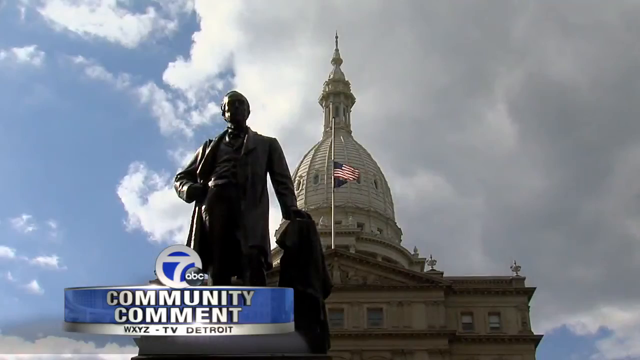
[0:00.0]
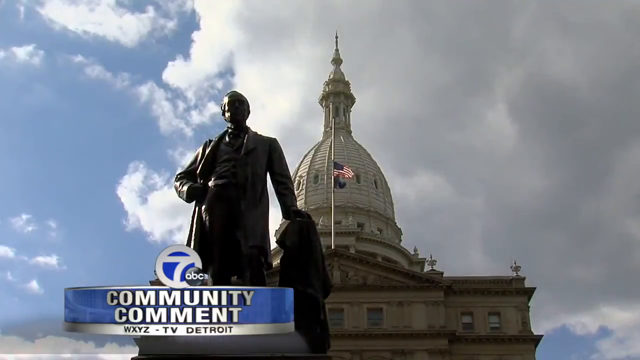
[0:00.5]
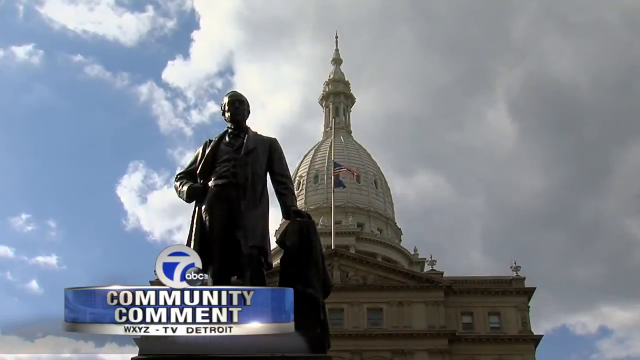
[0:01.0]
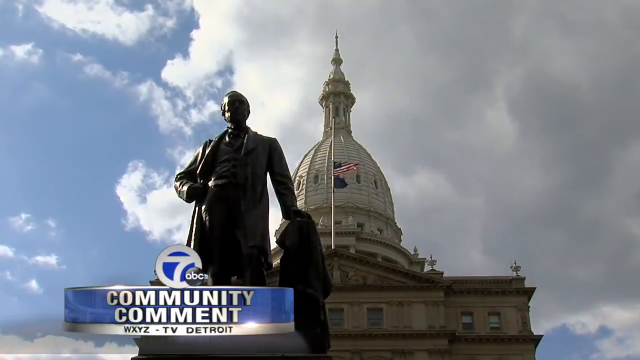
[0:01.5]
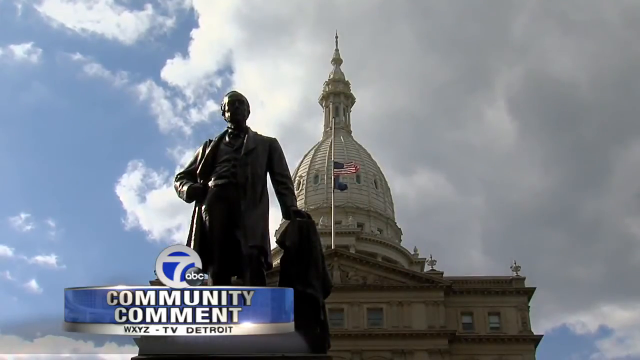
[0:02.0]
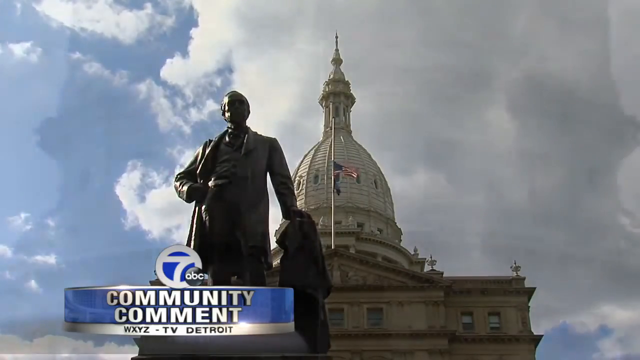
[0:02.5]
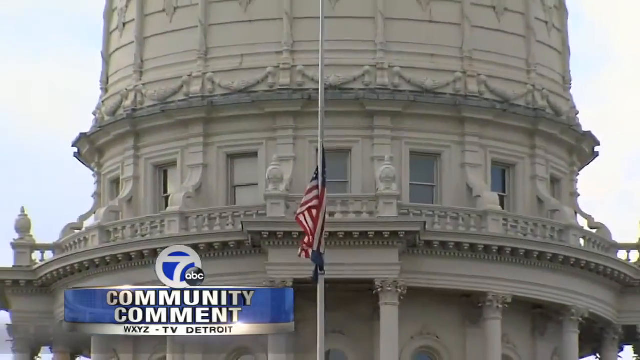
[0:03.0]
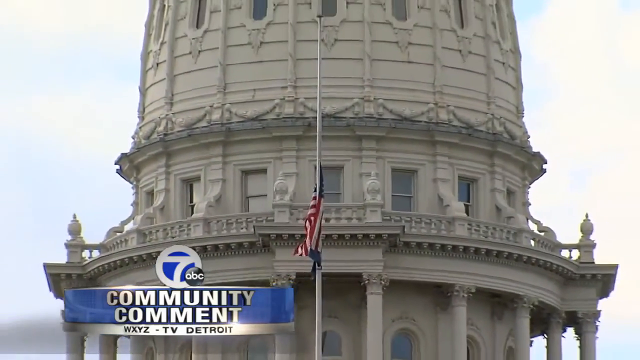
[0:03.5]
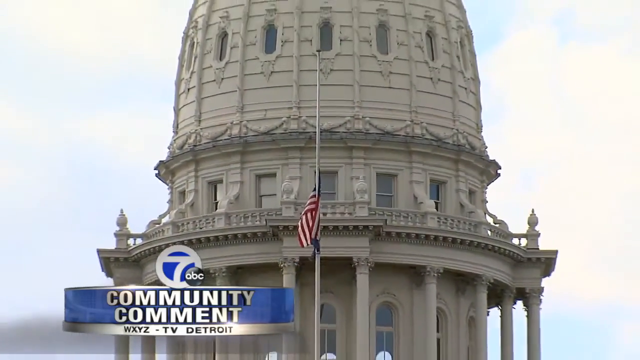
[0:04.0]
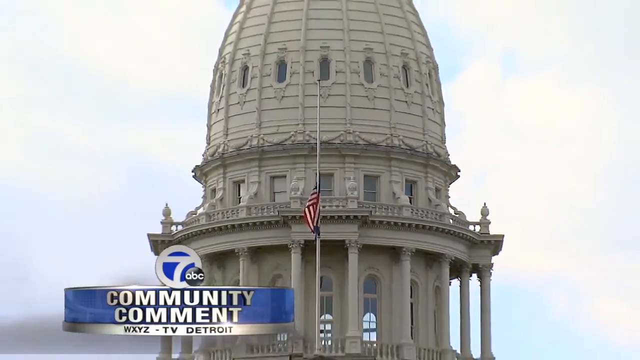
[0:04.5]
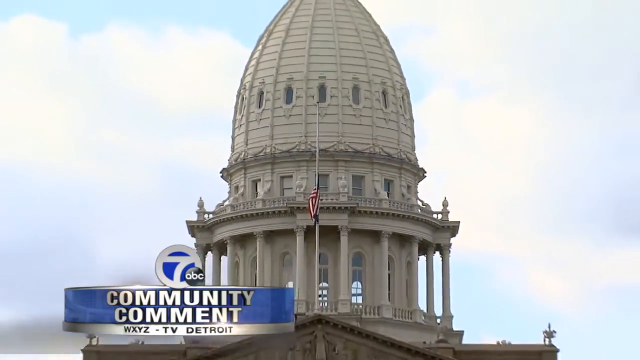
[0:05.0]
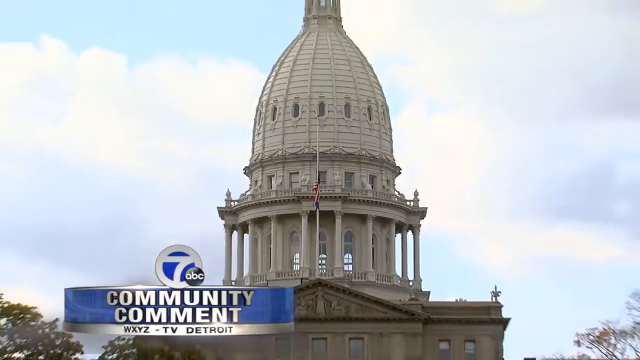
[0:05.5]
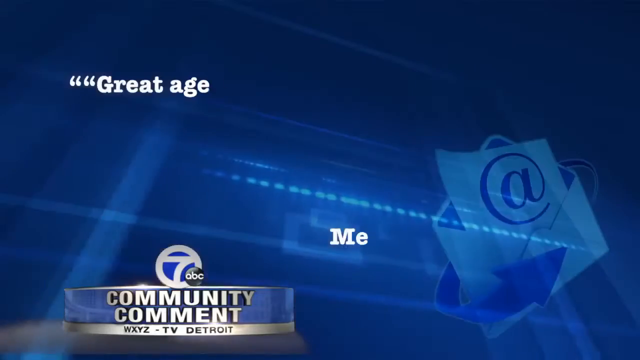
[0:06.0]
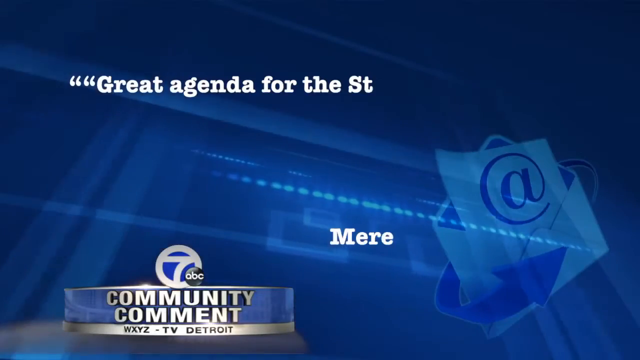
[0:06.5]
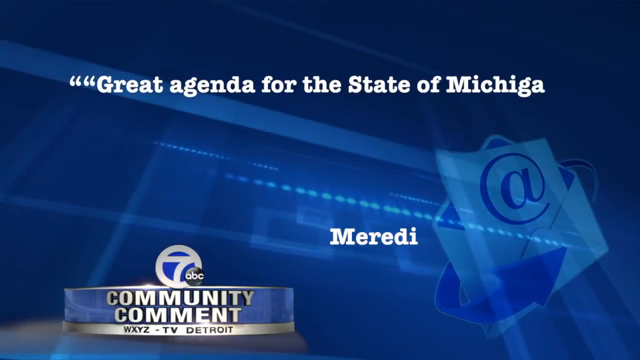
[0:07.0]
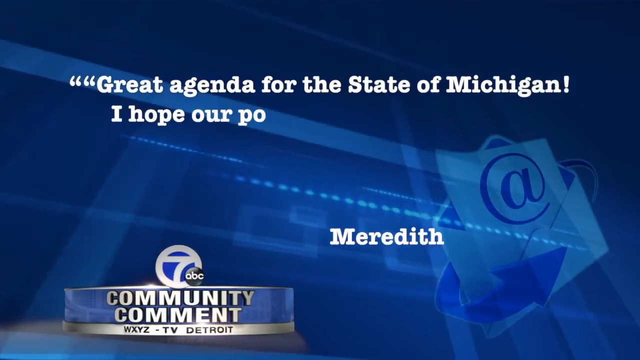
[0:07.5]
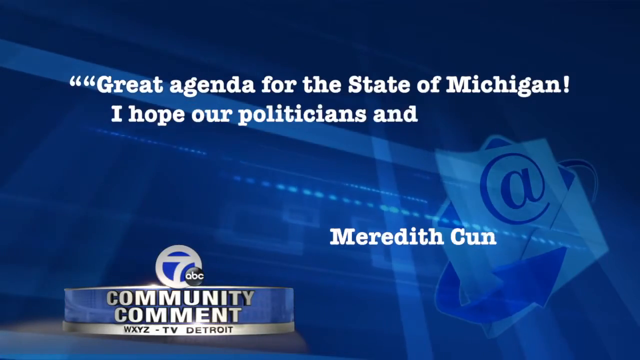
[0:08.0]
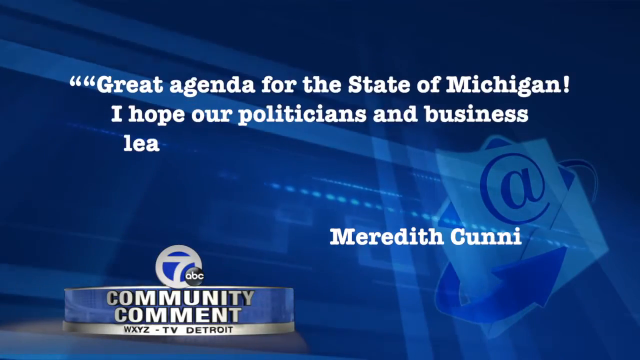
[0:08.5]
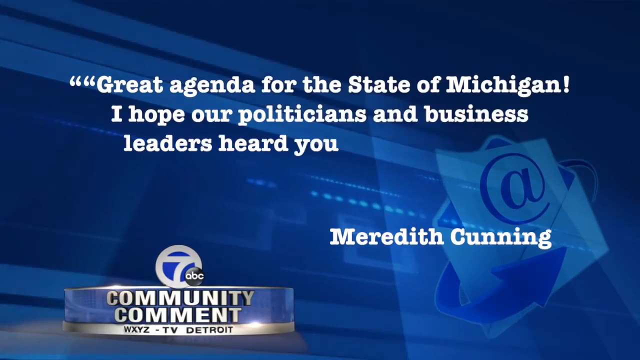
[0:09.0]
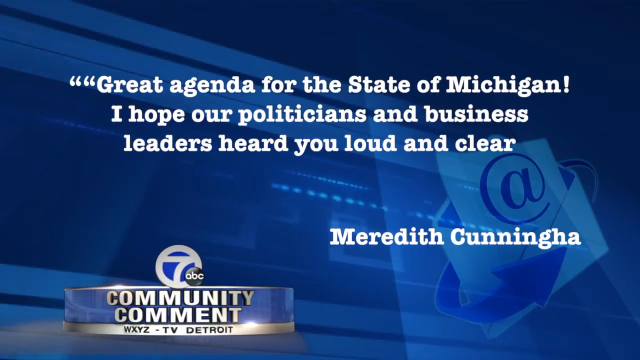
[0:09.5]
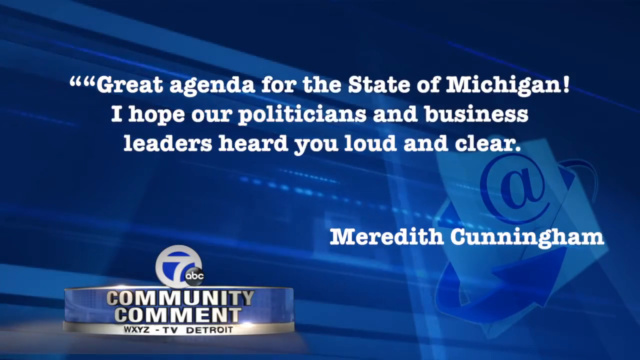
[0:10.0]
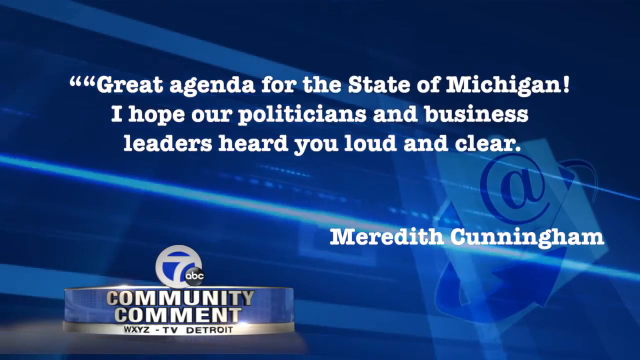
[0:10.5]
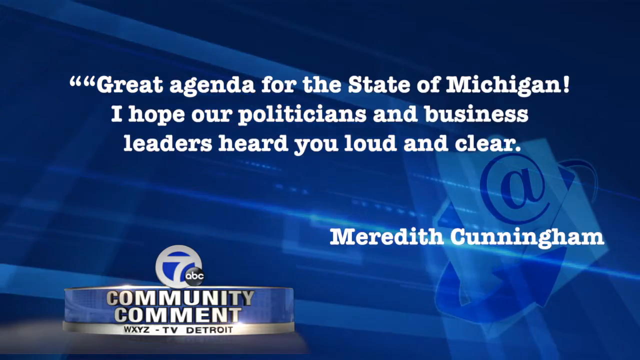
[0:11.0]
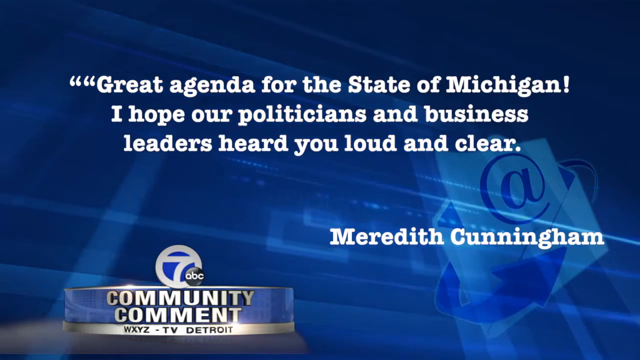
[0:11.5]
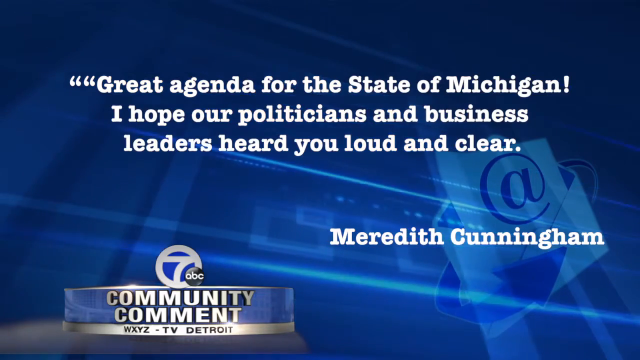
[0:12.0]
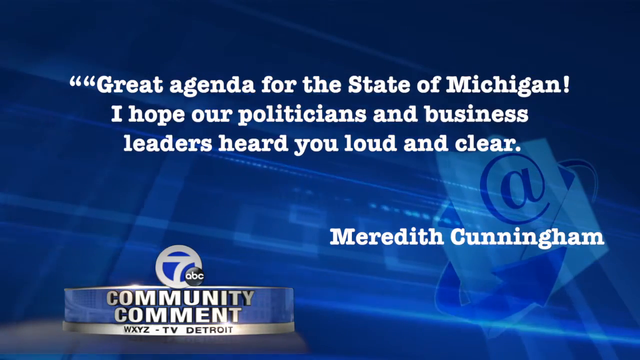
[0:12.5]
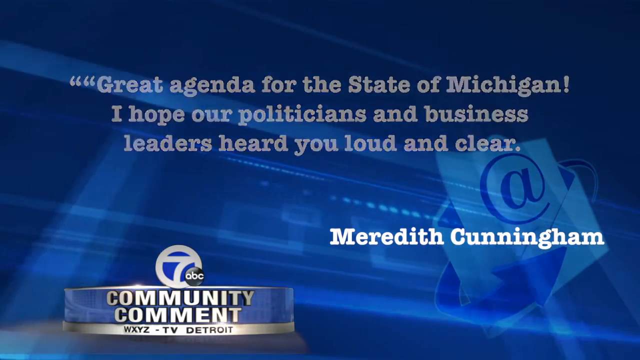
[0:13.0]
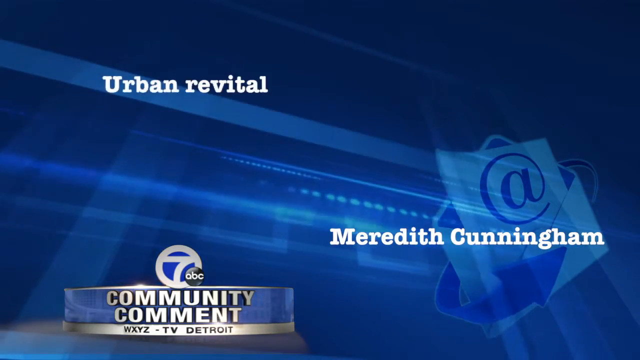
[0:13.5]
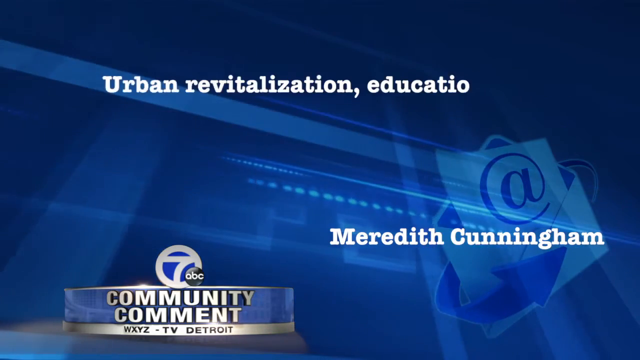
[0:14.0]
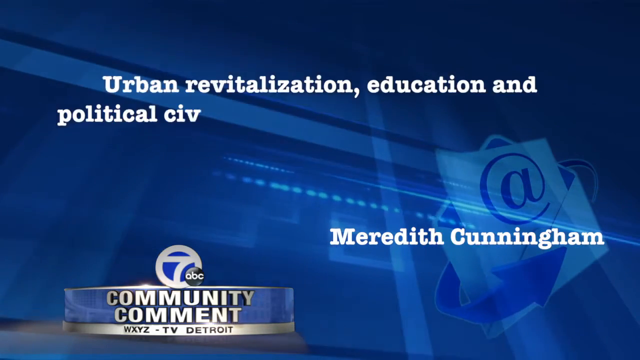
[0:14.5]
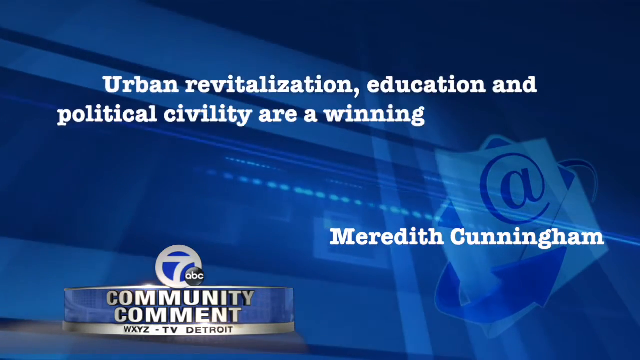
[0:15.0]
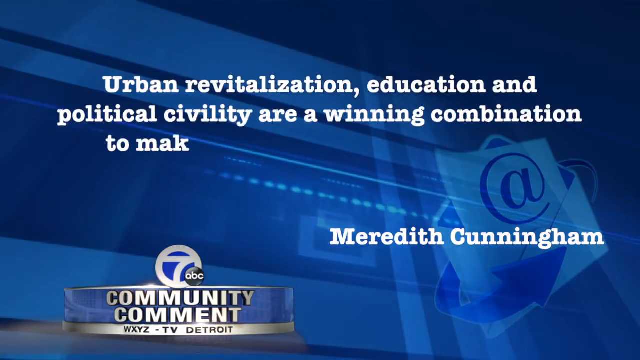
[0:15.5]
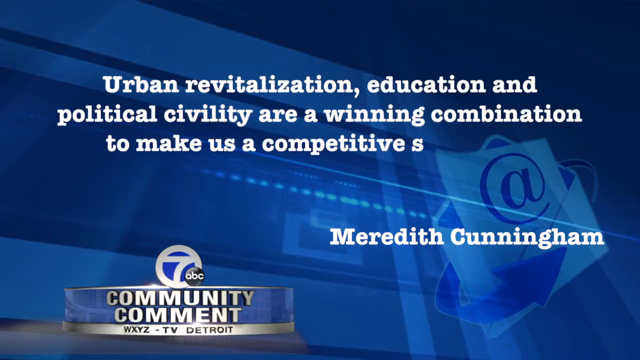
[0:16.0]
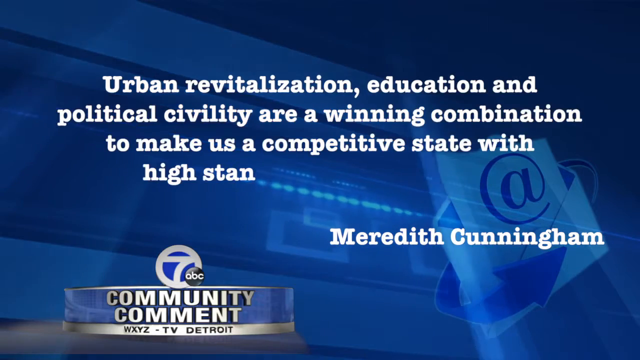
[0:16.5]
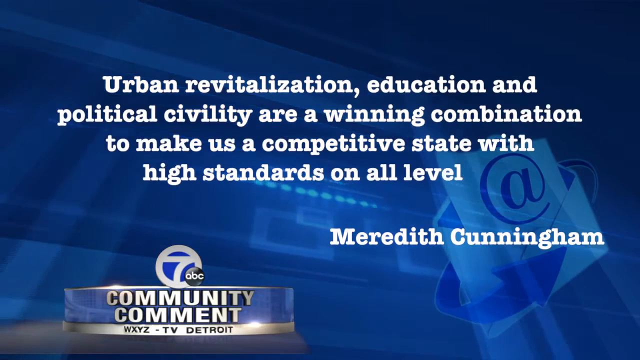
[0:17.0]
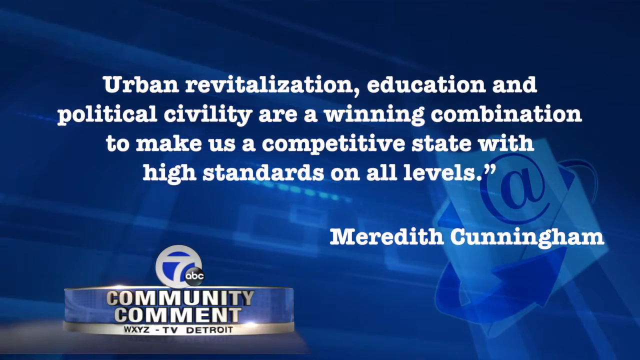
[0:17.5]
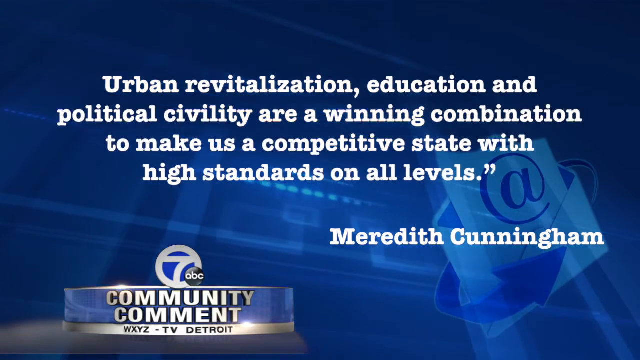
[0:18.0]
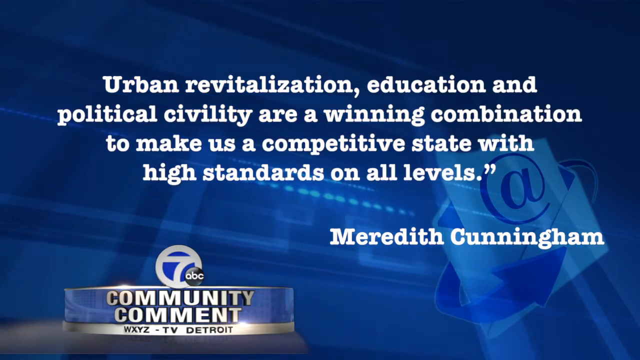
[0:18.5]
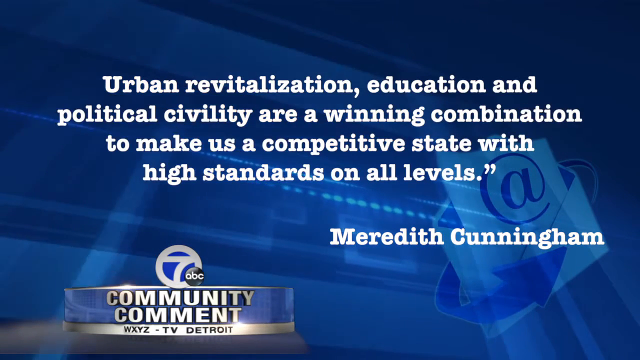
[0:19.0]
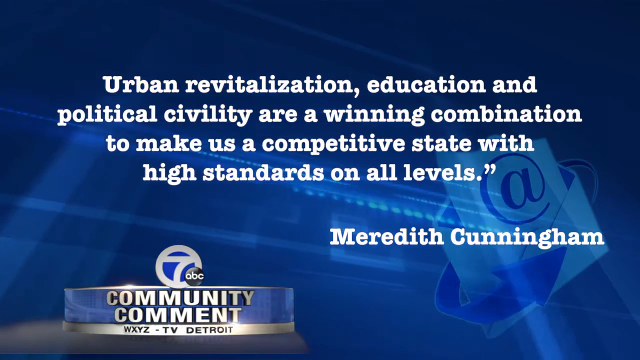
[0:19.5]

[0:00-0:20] The scene opens on a black statue, and the image seems to be a TV screen. Behind the statue is a building, a mosque, and in front of the building is a flag of the United States of America moved by the wind. The sky has white clouds. Text then appears on the screen: "great agenda for the state of Michigan. I hope our politicians and business leaders heard you loud and clear. Urban revitalization, education, and political civility are a winning combination to make us a competitive state with high standards on all levels." The quote is attributed to Meredith Cunningham. The TV station is ABC, with "Community comment" shown. The video returns to the opening scene: the building is tall and white, and the shot zooms out. This appears to be an introduction to the Meredith Cunningham quote.